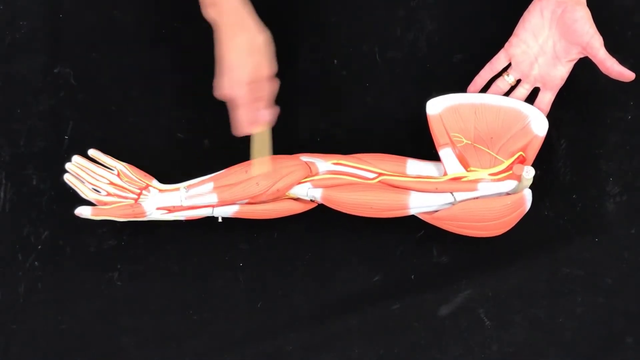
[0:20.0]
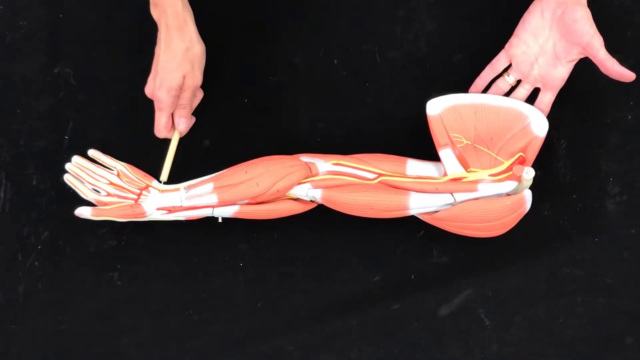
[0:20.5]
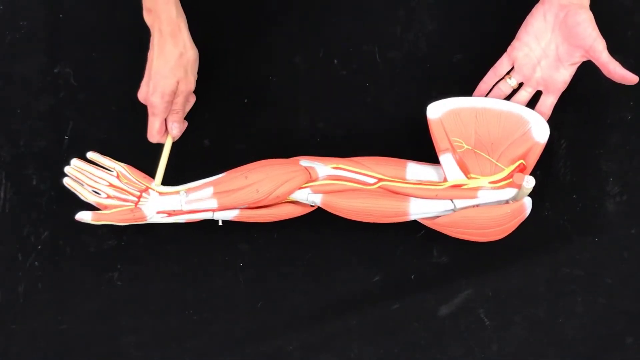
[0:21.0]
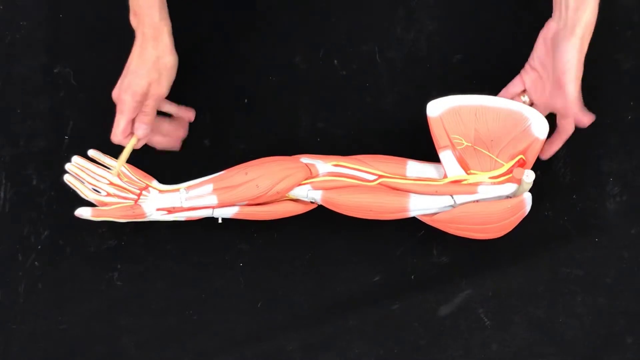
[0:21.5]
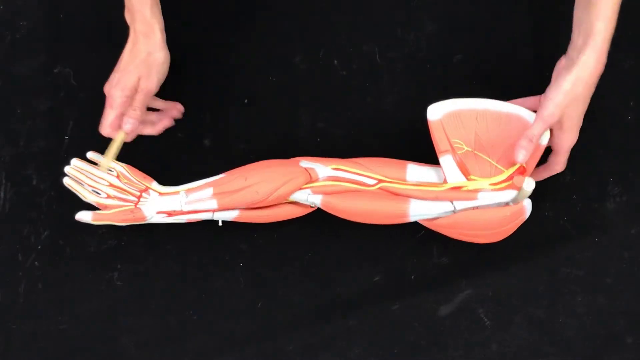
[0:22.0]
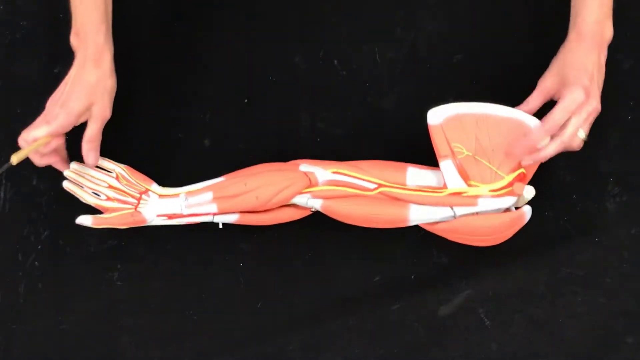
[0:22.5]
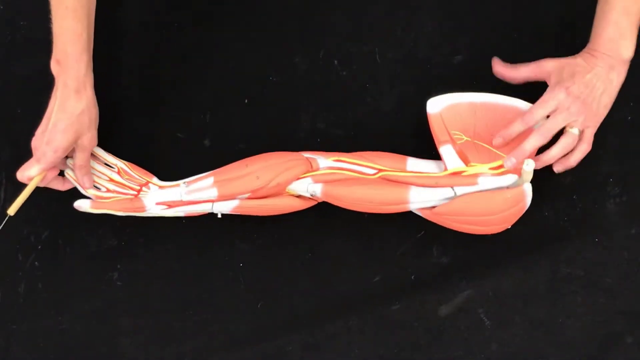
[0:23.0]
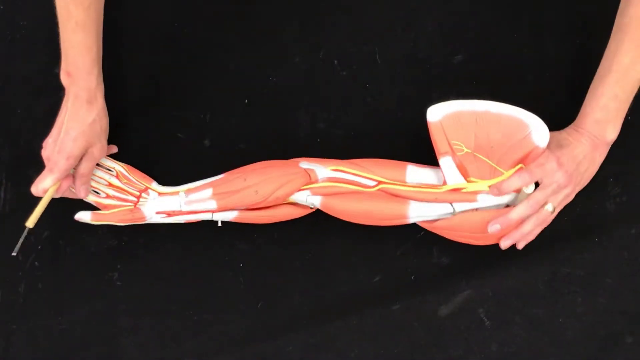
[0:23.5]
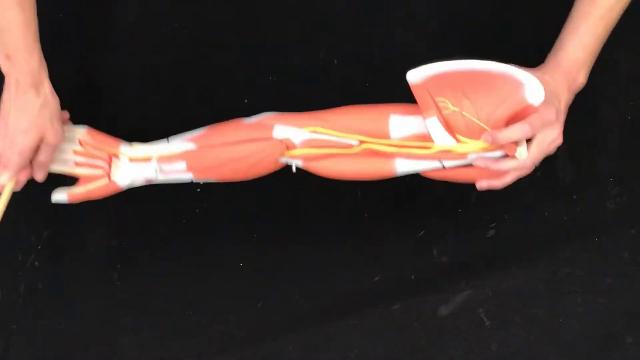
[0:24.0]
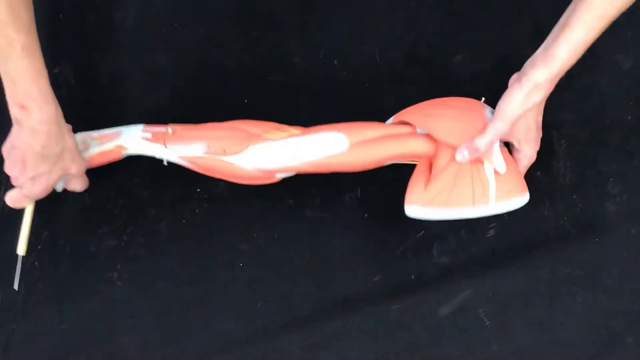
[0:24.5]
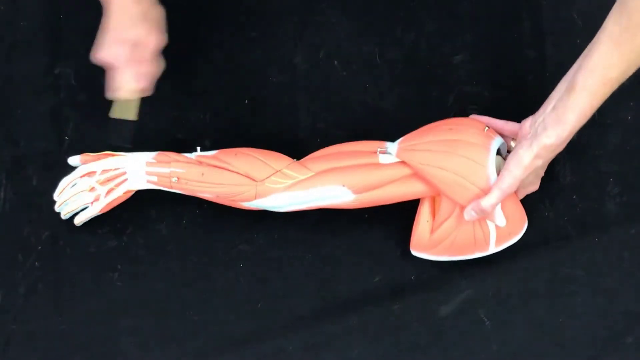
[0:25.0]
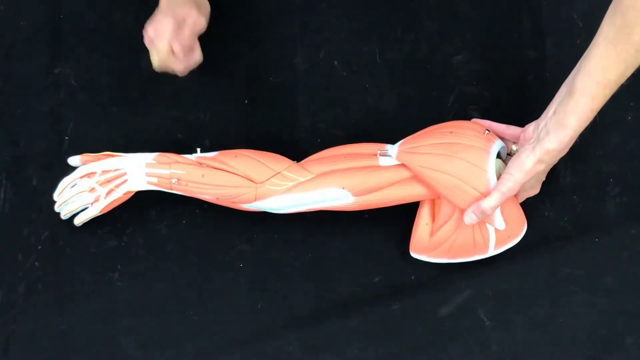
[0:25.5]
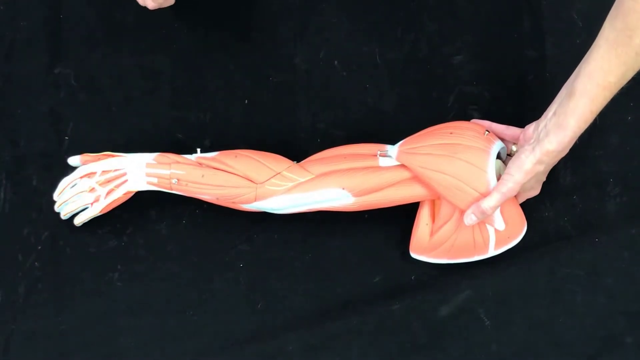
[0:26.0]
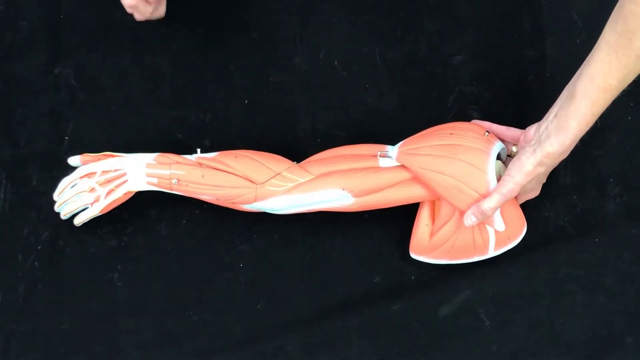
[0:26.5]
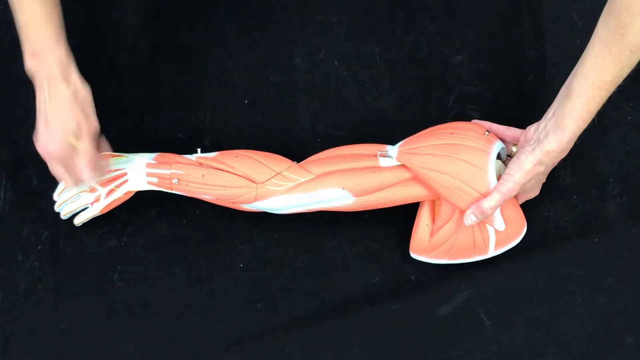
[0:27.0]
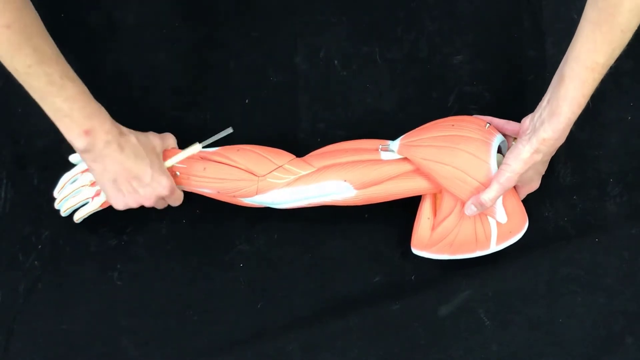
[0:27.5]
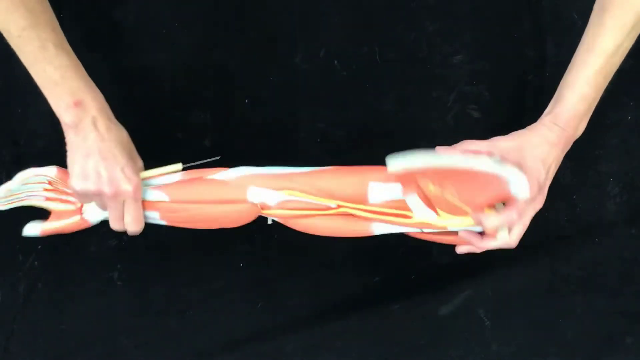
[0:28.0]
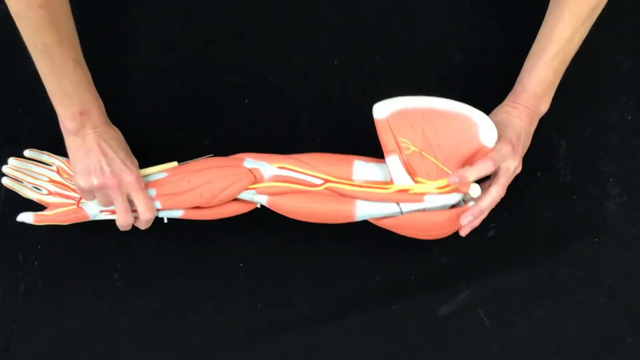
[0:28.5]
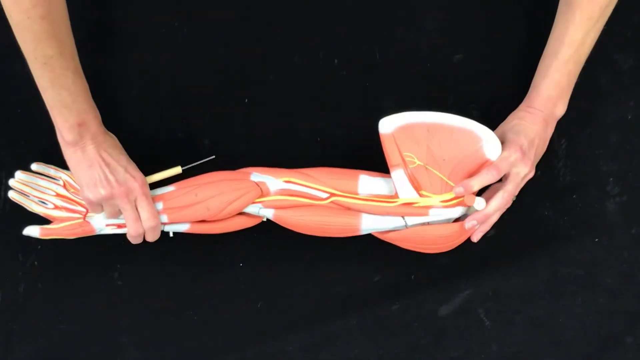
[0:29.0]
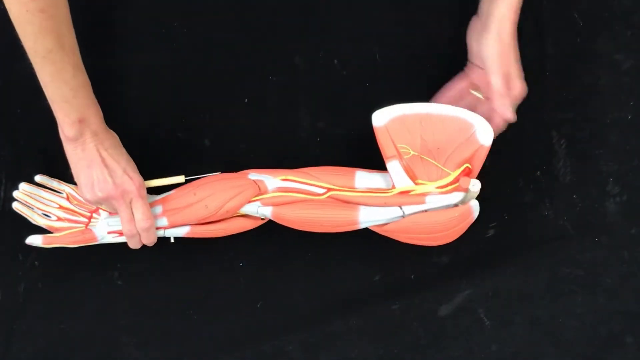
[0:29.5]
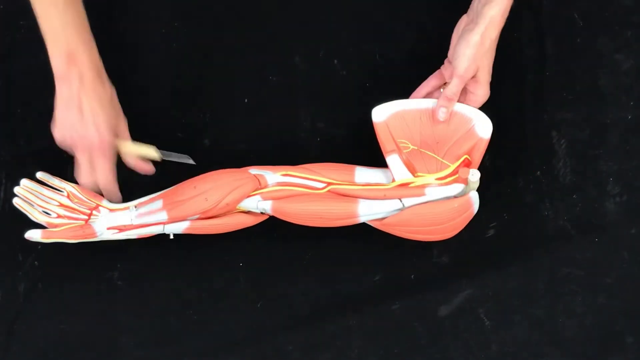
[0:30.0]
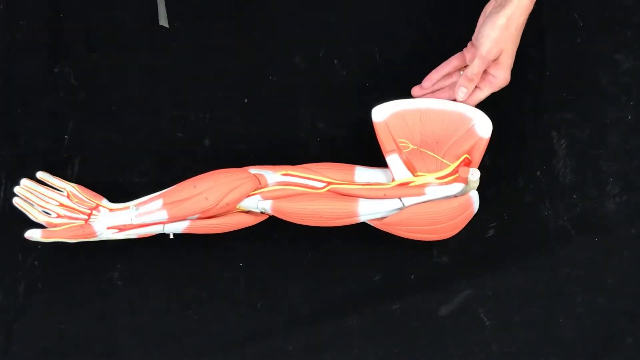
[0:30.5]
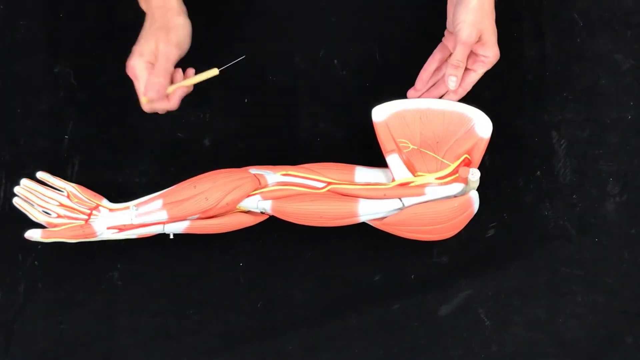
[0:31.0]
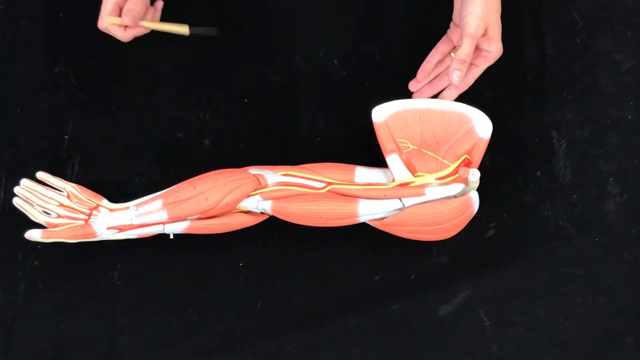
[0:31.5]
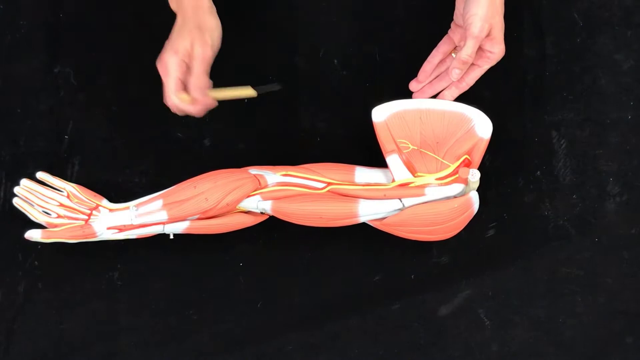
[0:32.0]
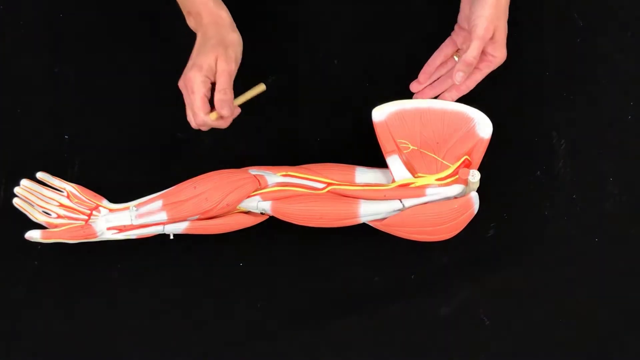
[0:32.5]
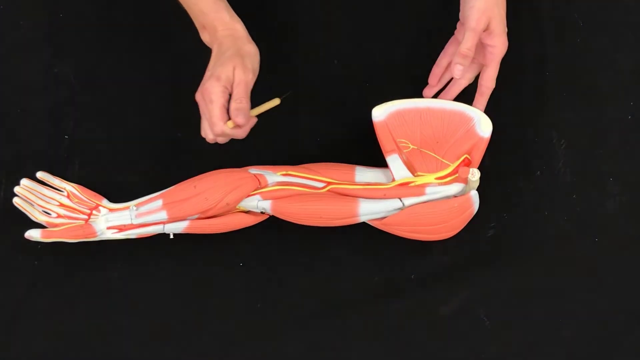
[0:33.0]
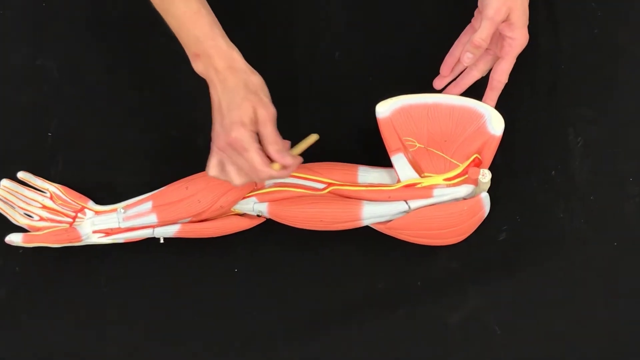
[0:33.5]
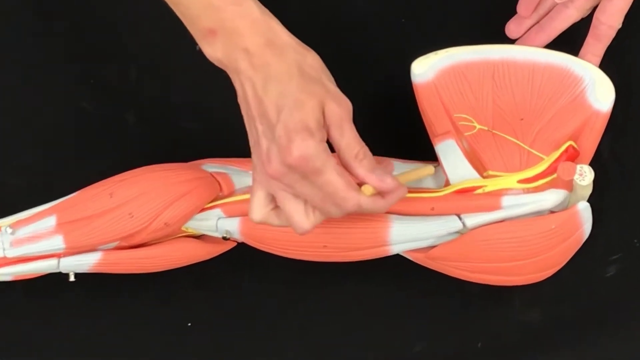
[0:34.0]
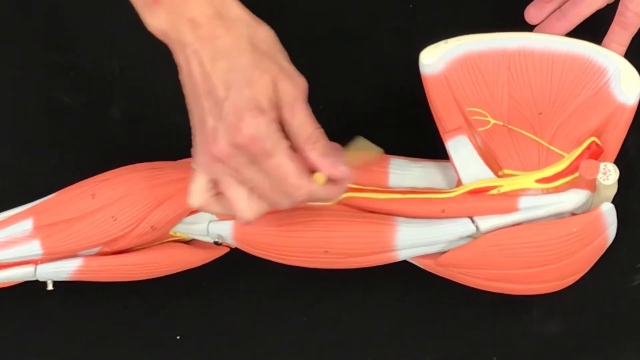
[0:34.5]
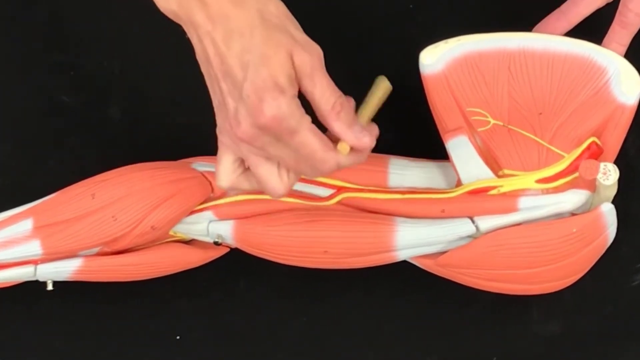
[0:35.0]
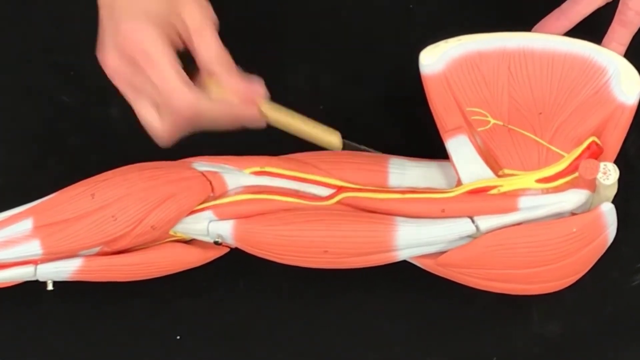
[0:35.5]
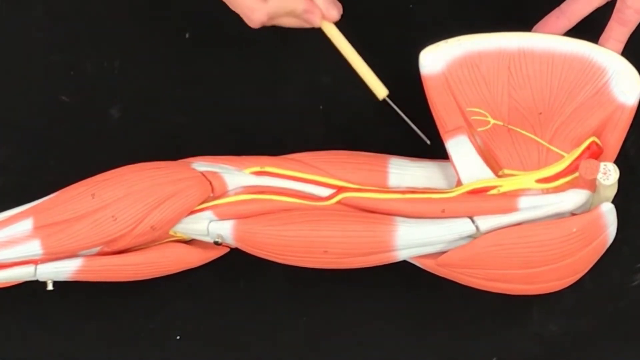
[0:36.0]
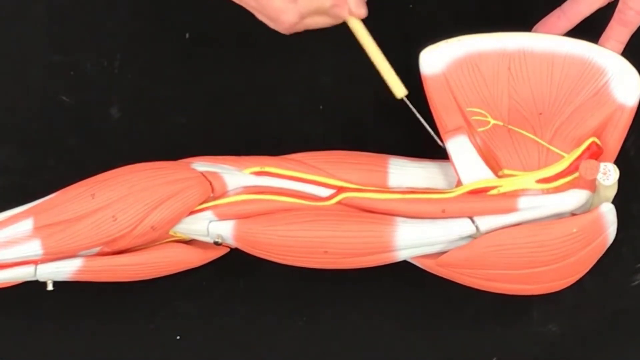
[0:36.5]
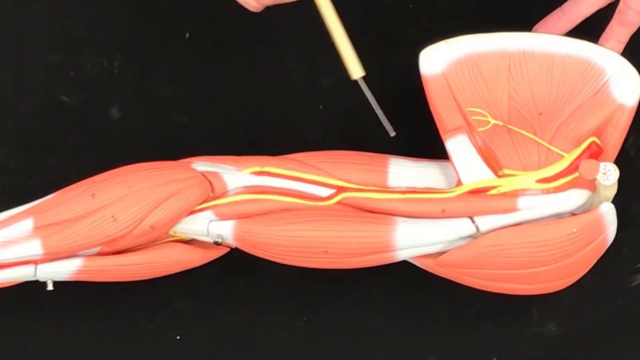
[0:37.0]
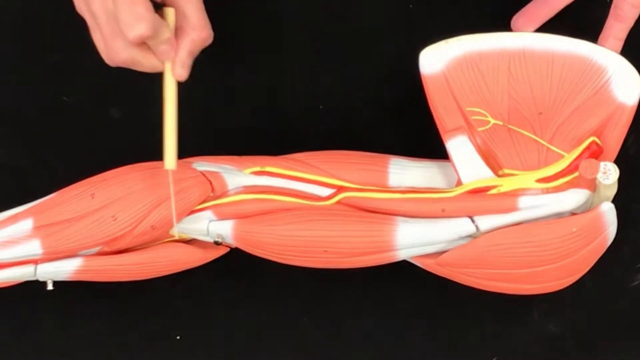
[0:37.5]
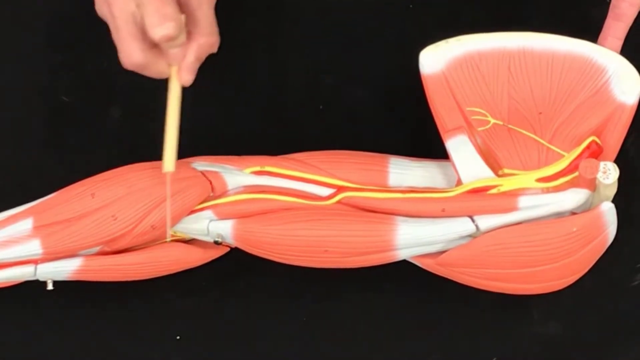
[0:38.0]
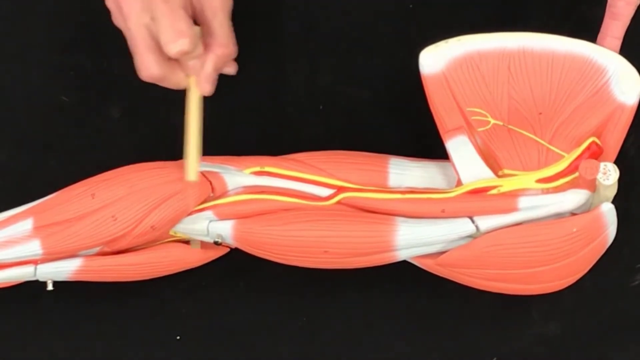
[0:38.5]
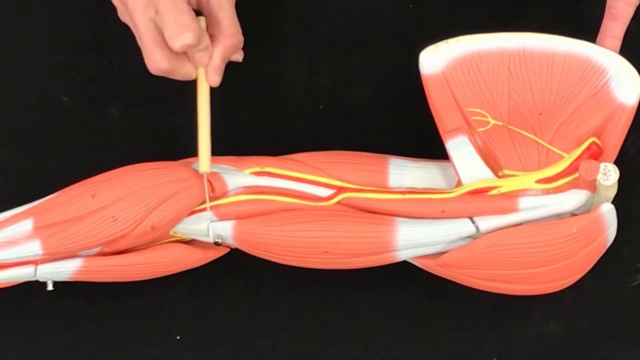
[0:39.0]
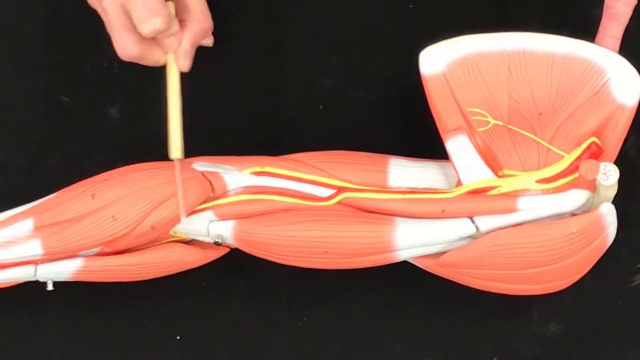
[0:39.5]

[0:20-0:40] The female teacher's hands take hold of the training model, lift it and place it upside down on the table, so that it appears to show the outside of a left shoulder and arm. She points to something on this side of the model, then picks it up and turns it back over so the inside of the arm faces up again. She points the pointer at what would be the tricep area of the upper arm, then makes circular motions with it over the tendons and ligaments on the inside of the elbow. The colors in the video change because of the room lighting, and the muscles become much pinker and brighter. The video is teaching about the anatomy of the human body.